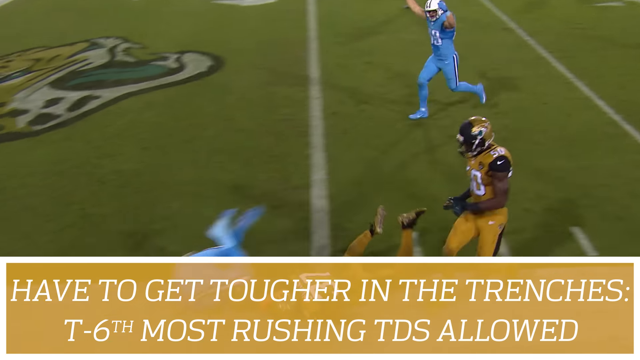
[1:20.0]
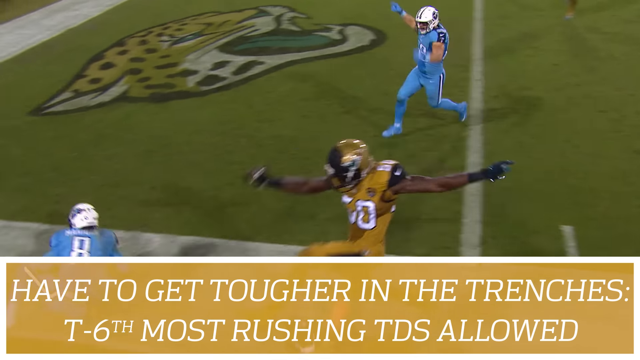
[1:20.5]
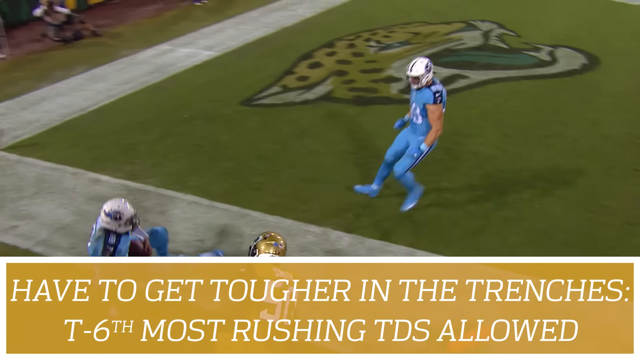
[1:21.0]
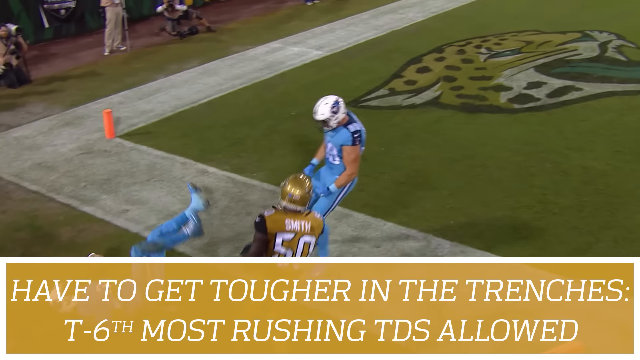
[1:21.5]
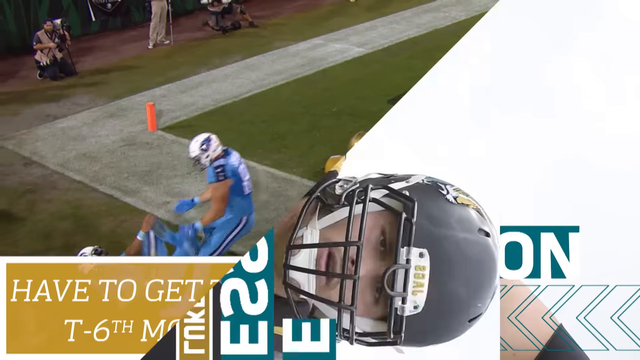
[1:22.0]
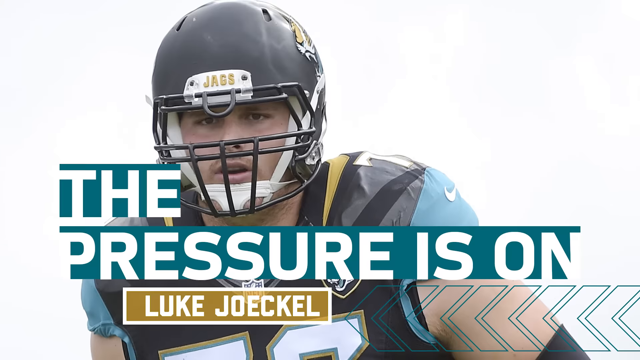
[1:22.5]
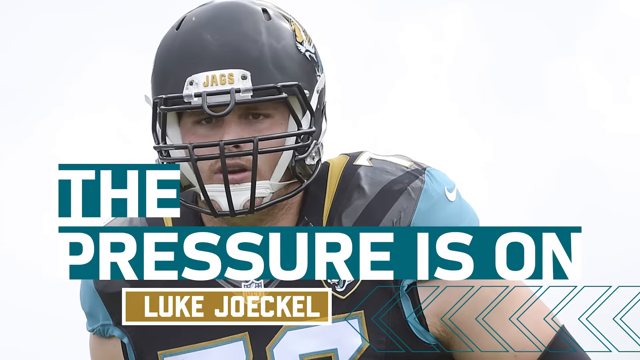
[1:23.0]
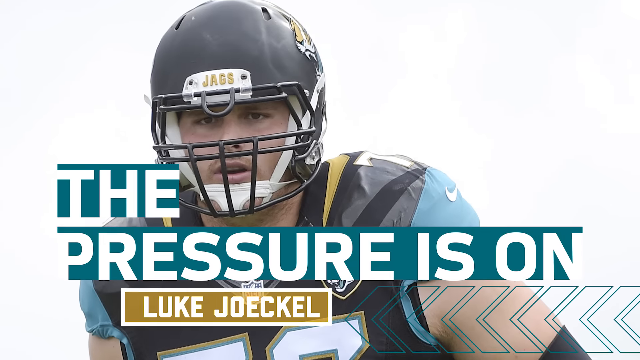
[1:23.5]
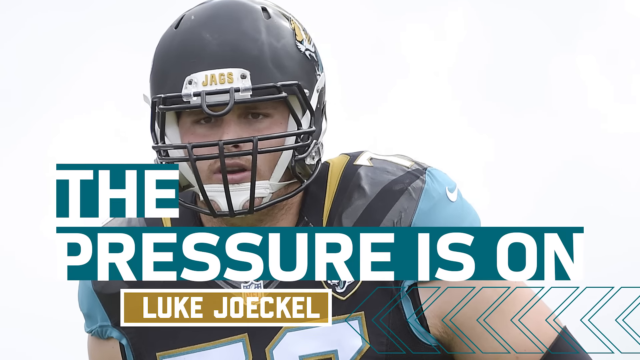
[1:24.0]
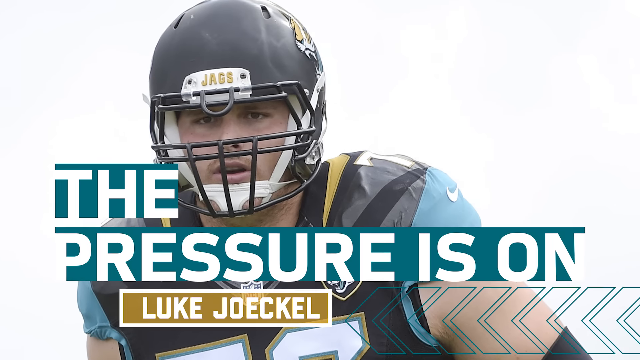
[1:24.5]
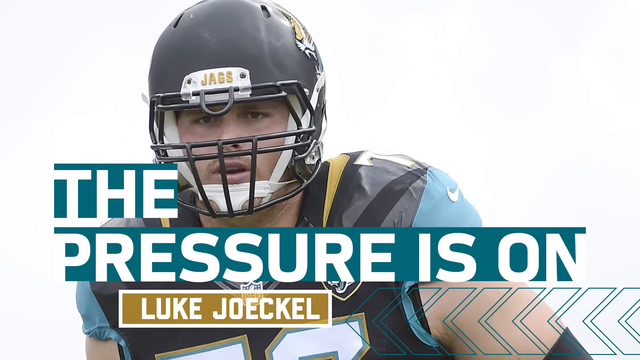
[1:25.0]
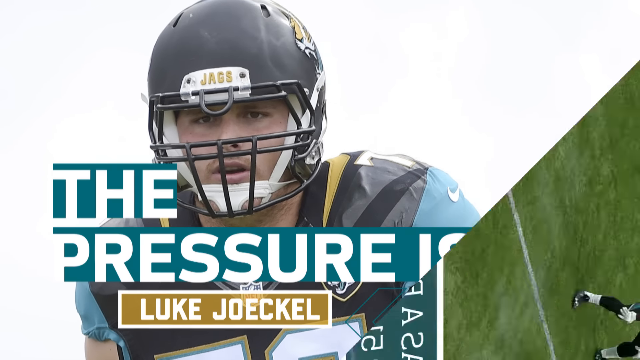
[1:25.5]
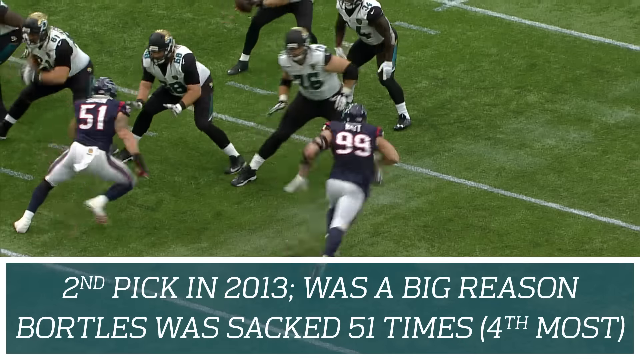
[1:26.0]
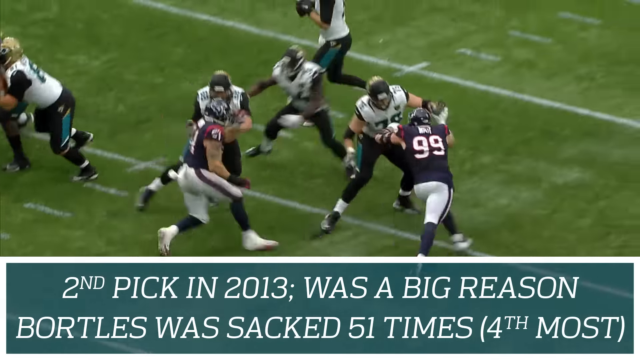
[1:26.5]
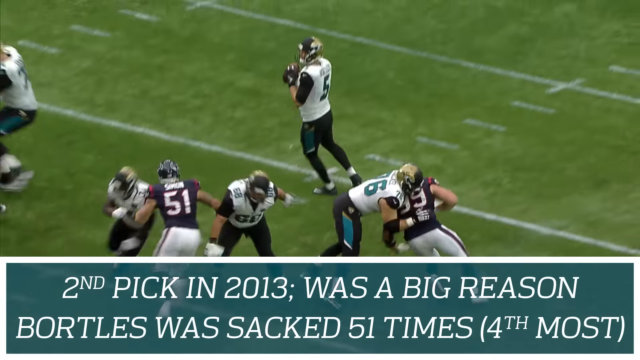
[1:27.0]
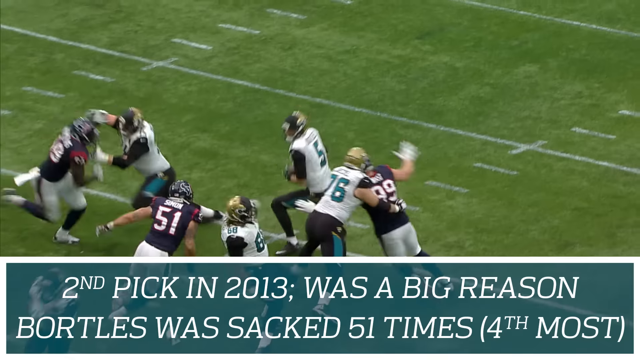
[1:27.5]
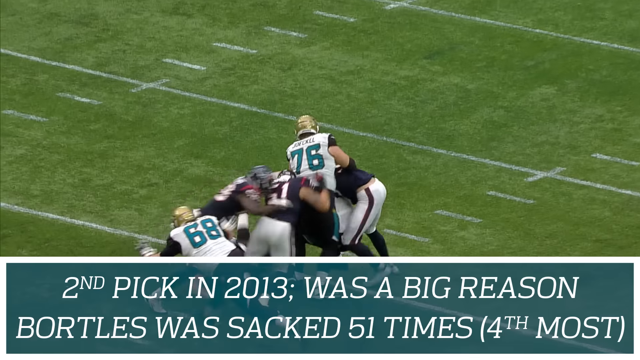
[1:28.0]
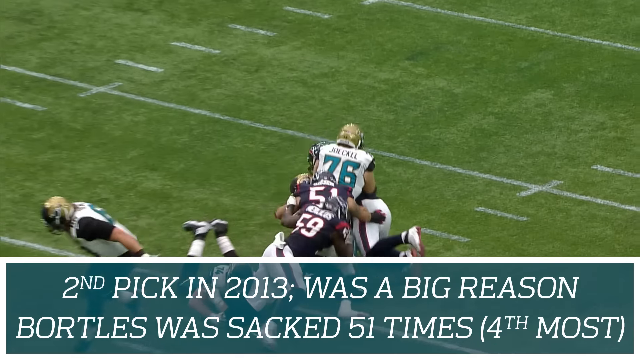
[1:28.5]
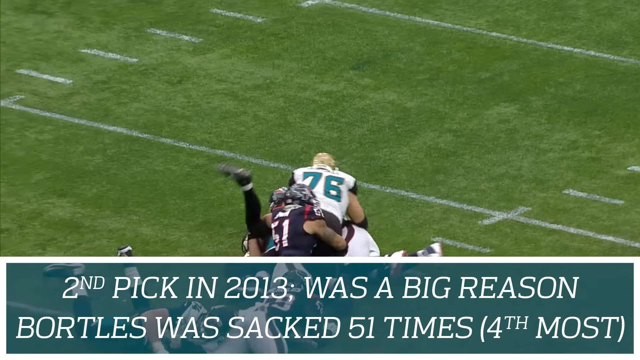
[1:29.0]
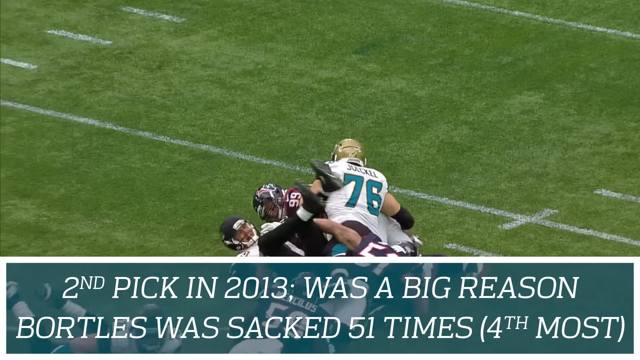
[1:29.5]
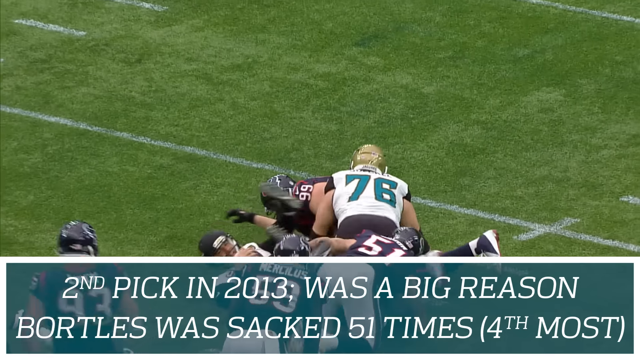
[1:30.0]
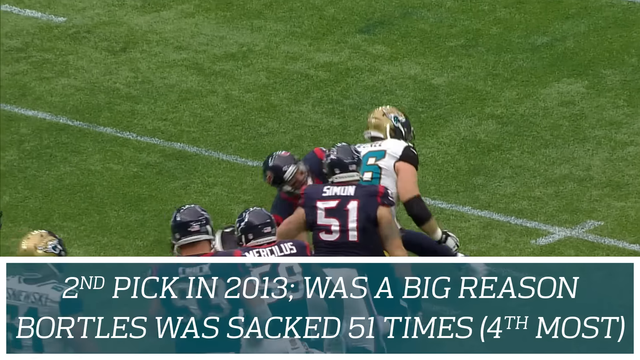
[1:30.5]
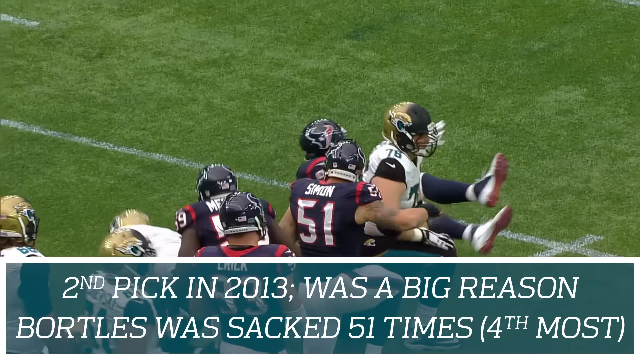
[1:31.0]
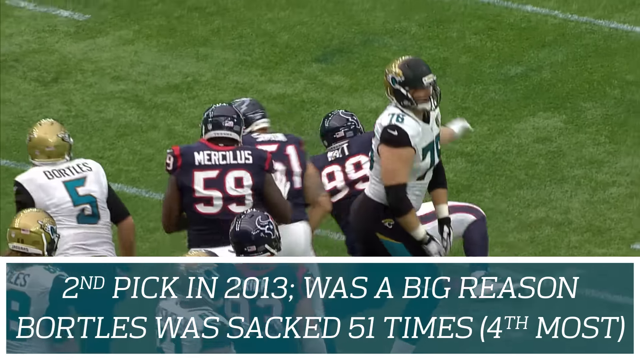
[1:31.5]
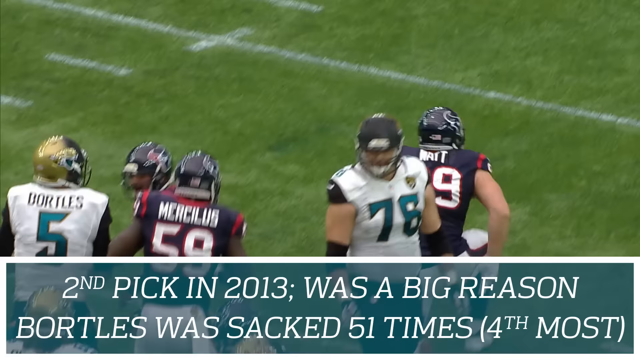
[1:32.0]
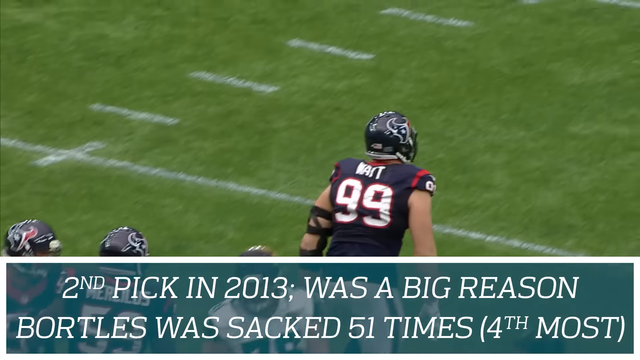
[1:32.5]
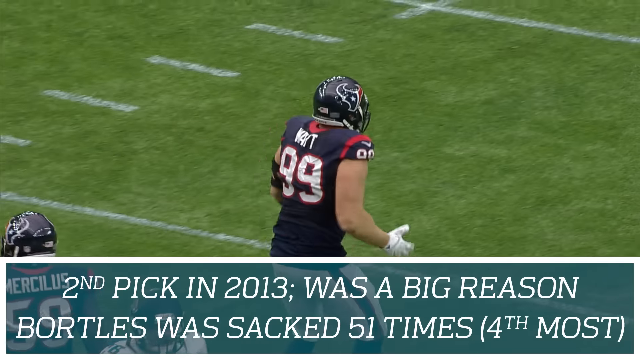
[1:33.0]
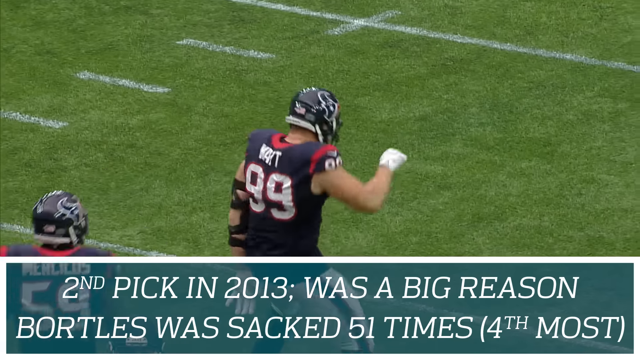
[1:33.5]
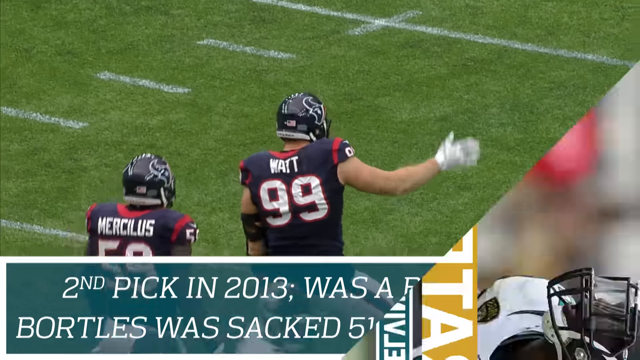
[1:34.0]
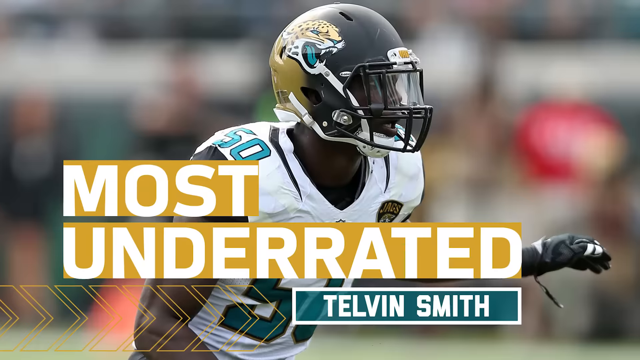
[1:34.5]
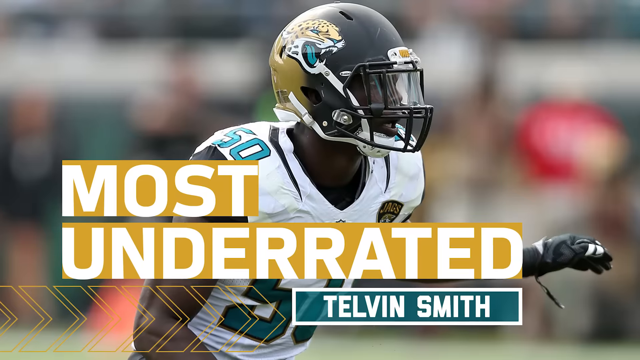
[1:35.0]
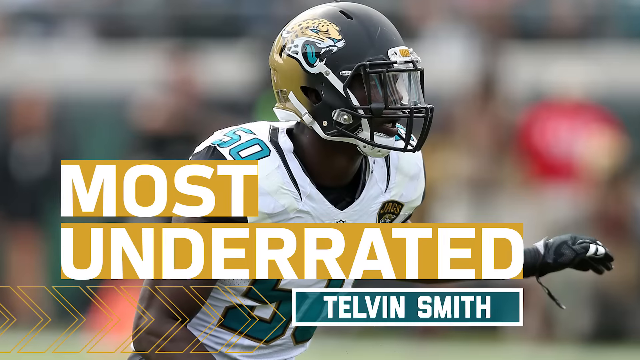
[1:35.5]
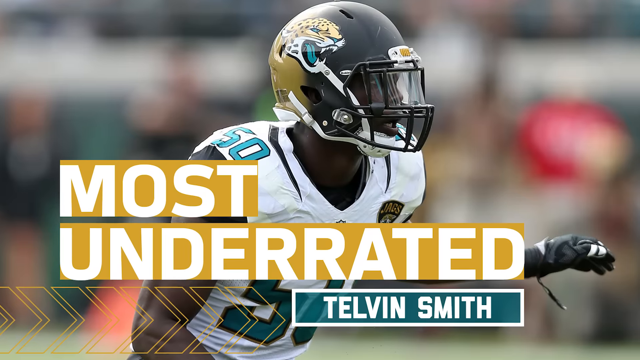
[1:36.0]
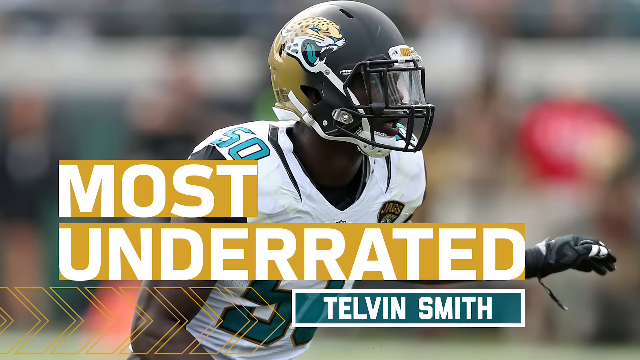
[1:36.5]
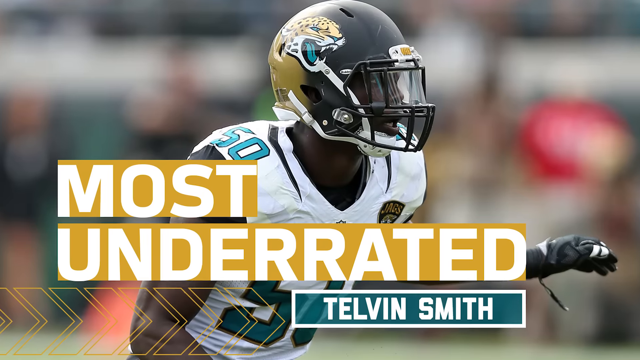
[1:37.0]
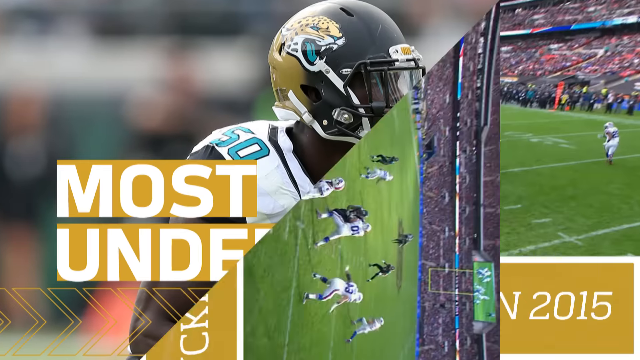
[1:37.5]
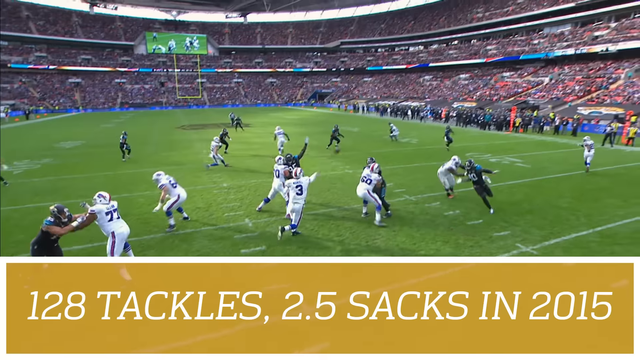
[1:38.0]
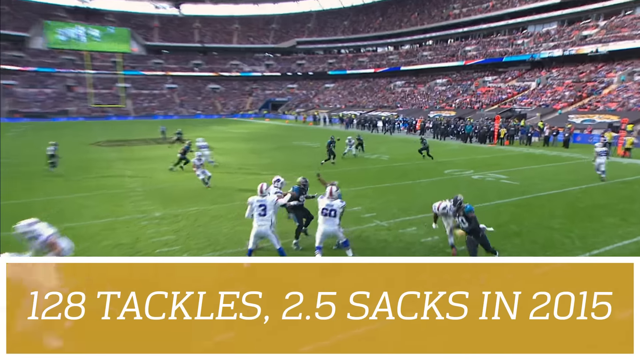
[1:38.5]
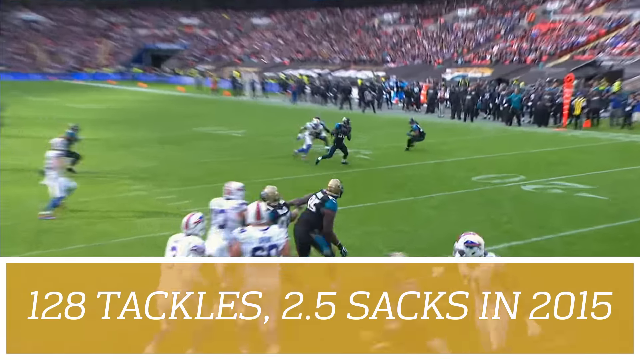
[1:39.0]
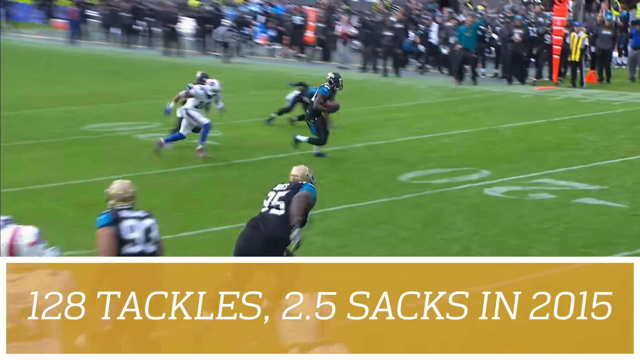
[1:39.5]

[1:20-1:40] The Titans quarterback dives to the corner of the end zone, breaking the pylon, and scores the touchdown. The scene changes to a Jacksonville Jaguars player with very large text at the bottom reading "the pressure is on," and beneath it the player's name, Luke Joeckel. In a game between the Jaguars and the Houston Texans, the Jaguars quarterback has the ball and ducks as he is about to be sacked. A whole bunch of defenders rush and surround him, at least three reaching him, and tackle him to the ground before he has time to look downfield or throw. J.J. Watt of the Houston Texans gets up and does a celebration dance after the sack. The scene changes to a Jacksonville Jaguars player, number 50, in the middle looking to the right, with the text "most underrated Telvin Smith" in the middle. In a game between the Buffalo Bills and the Jacksonville Jaguars, the Bills quarterback throws the ball to the right side and it is intercepted by a Jaguars defender, who runs toward the end zone for a pick six.